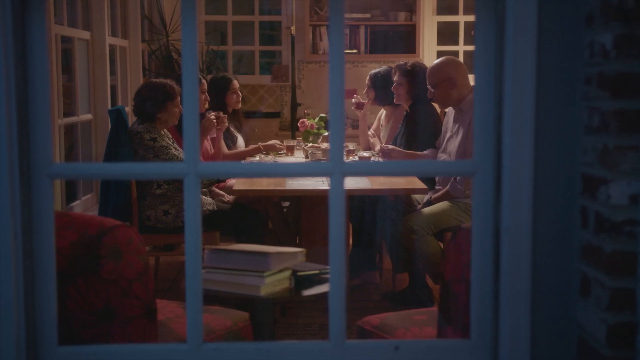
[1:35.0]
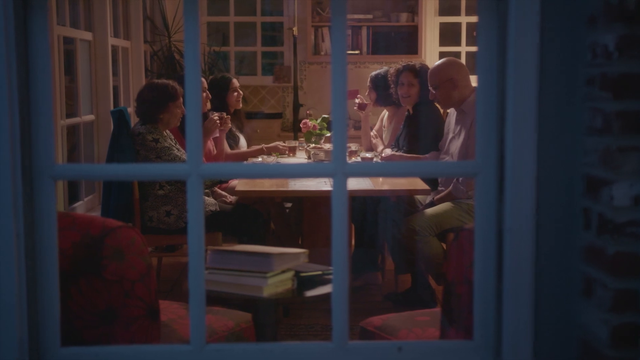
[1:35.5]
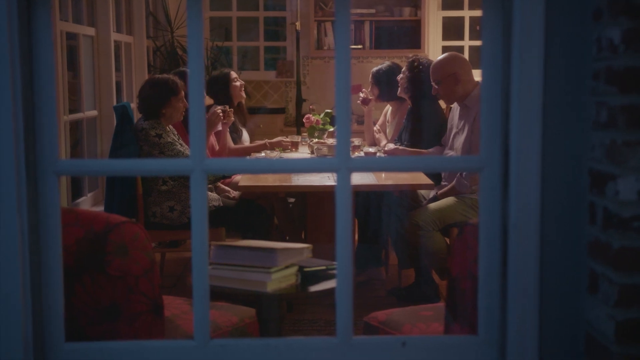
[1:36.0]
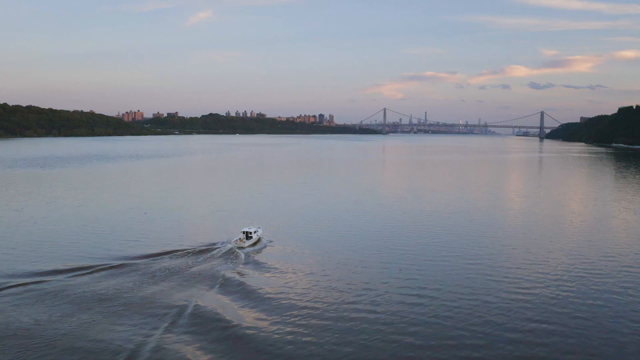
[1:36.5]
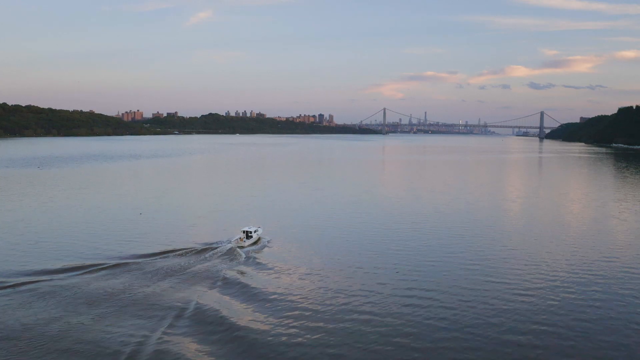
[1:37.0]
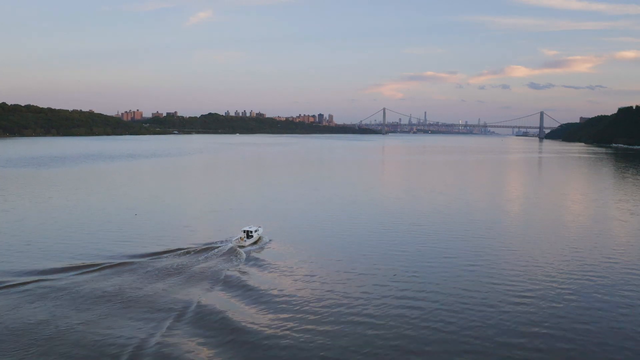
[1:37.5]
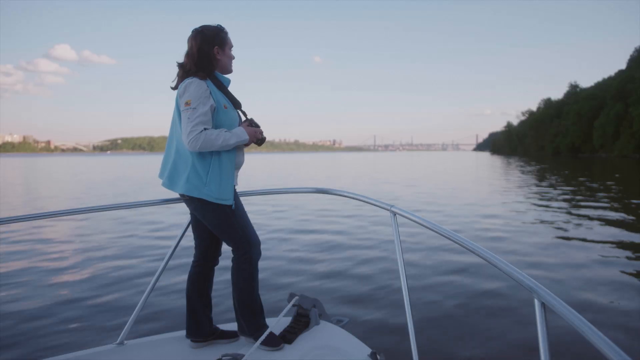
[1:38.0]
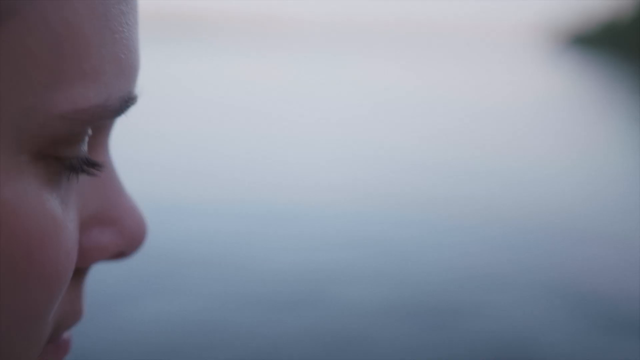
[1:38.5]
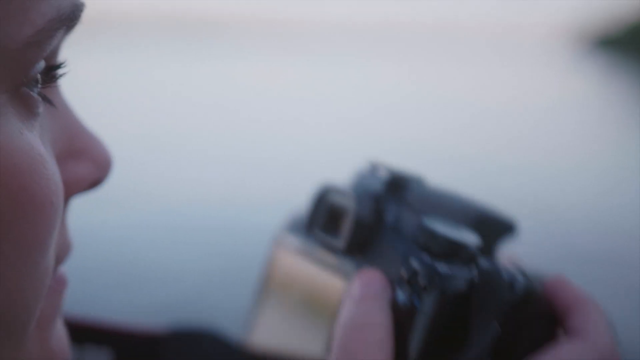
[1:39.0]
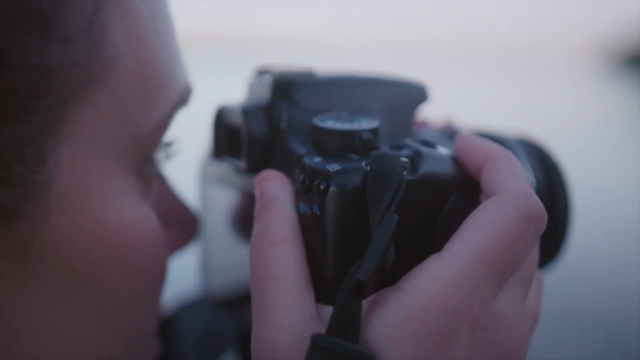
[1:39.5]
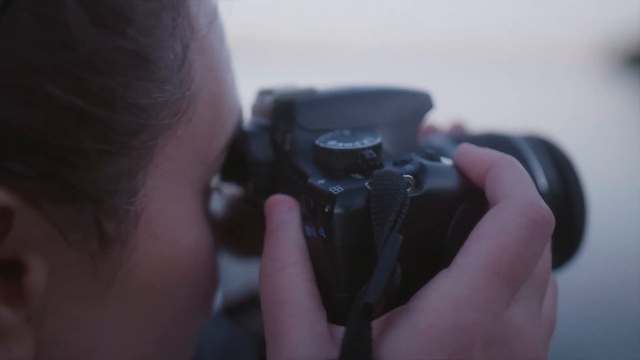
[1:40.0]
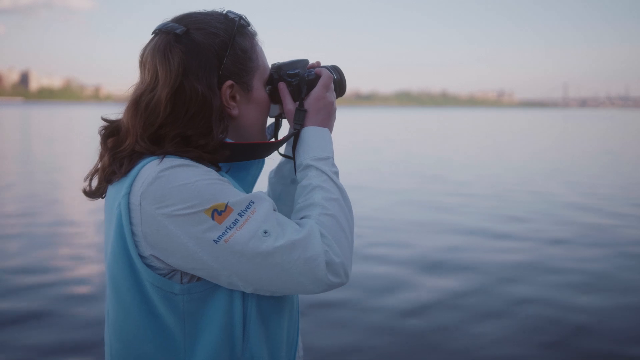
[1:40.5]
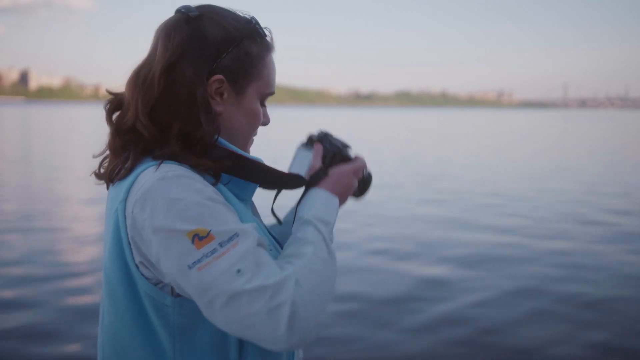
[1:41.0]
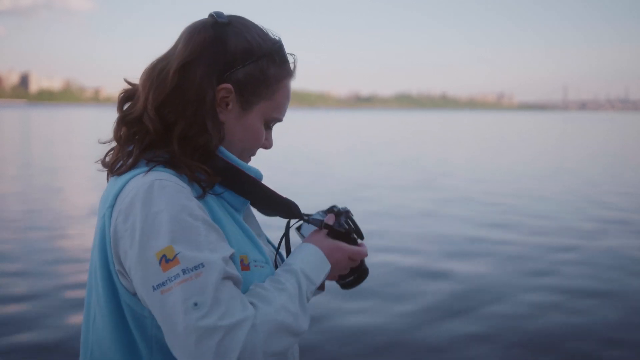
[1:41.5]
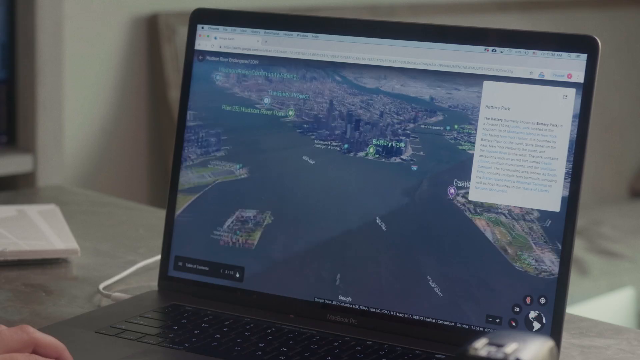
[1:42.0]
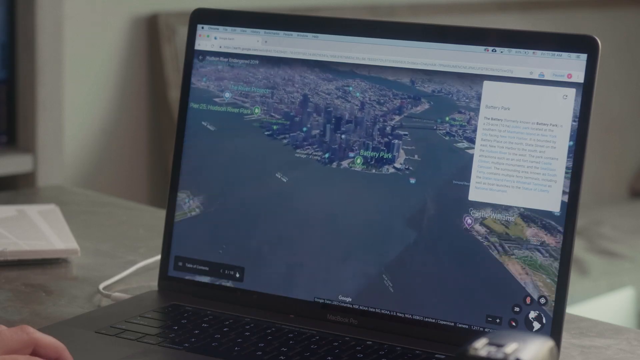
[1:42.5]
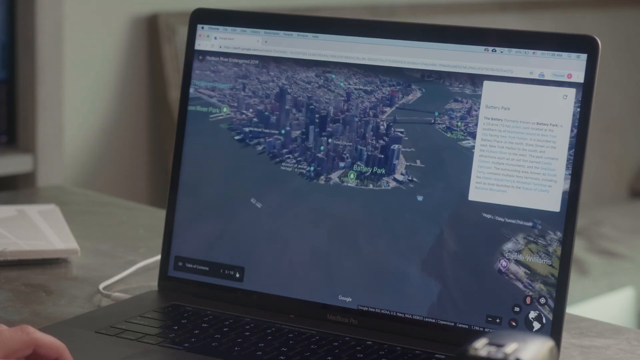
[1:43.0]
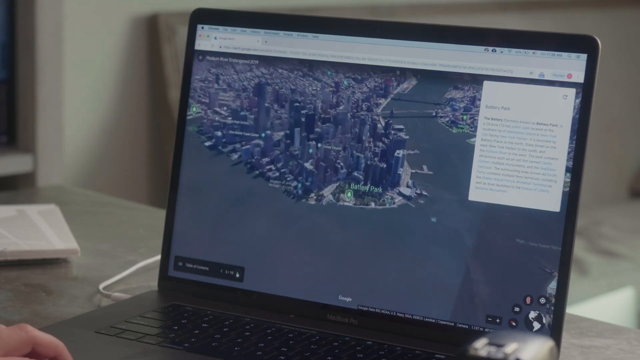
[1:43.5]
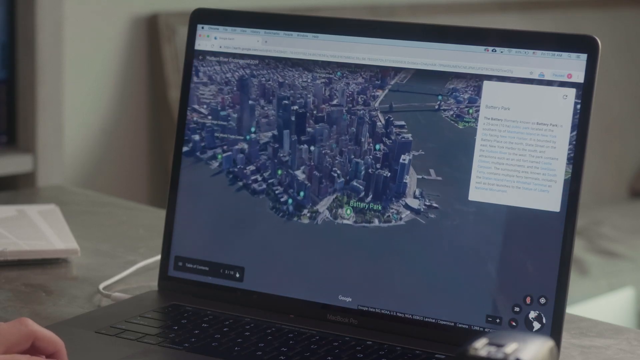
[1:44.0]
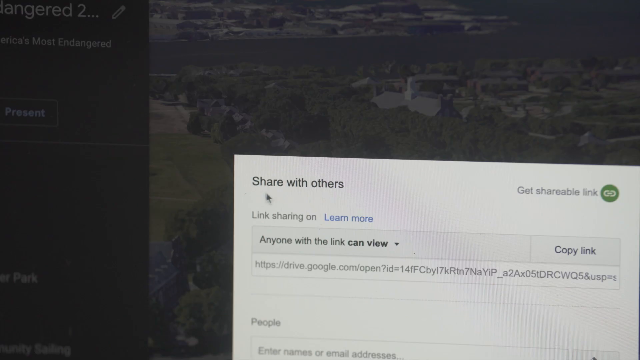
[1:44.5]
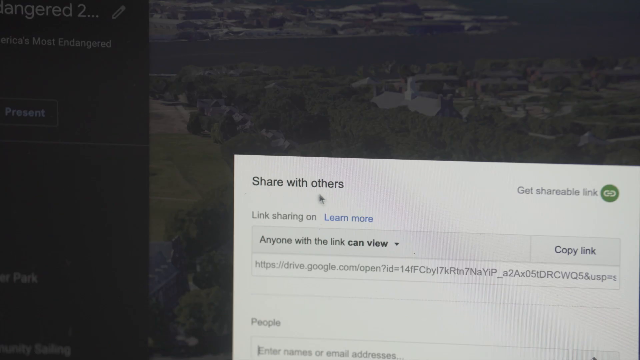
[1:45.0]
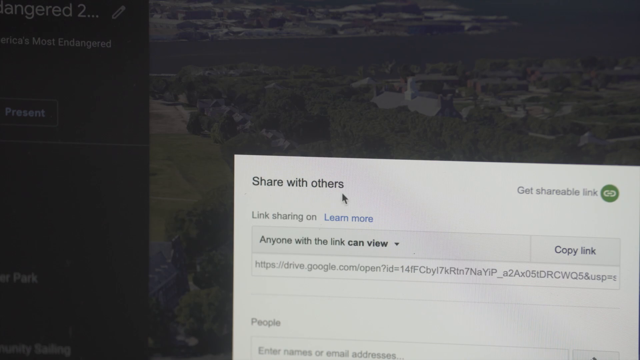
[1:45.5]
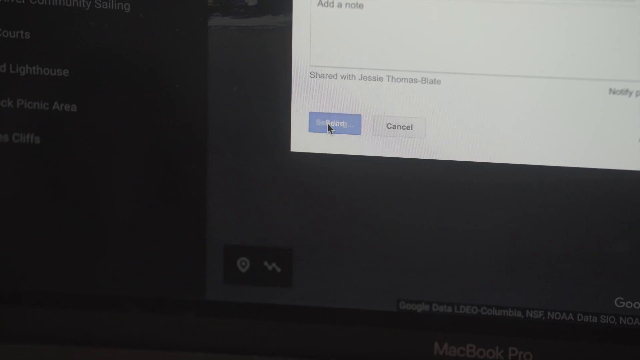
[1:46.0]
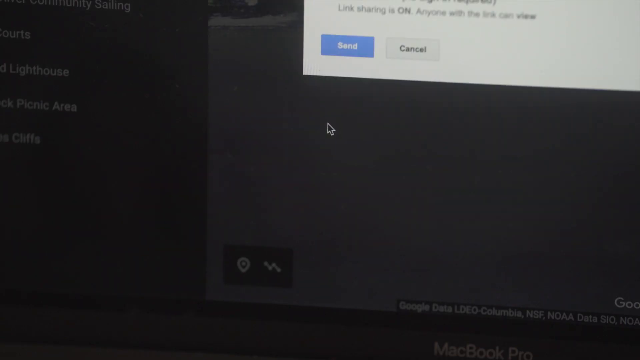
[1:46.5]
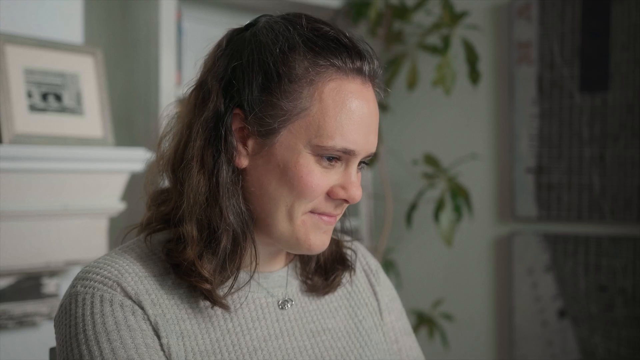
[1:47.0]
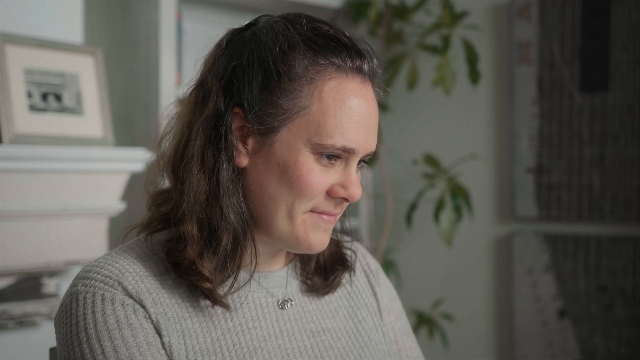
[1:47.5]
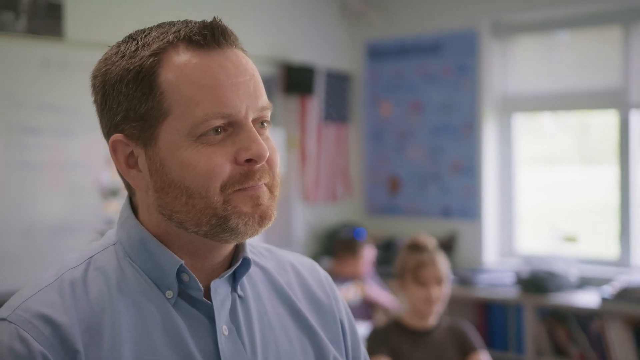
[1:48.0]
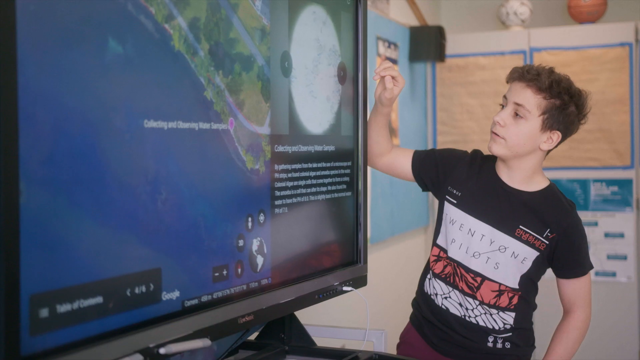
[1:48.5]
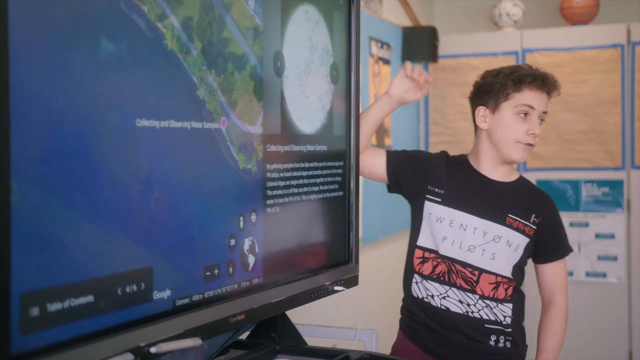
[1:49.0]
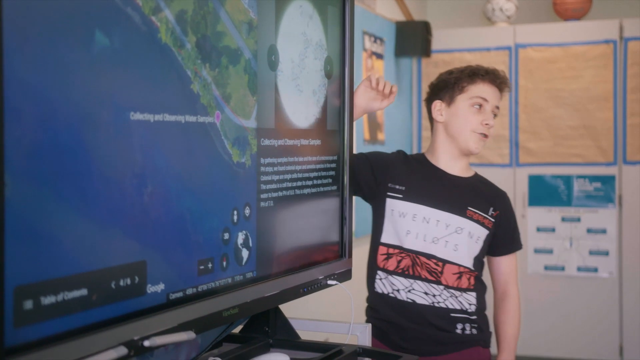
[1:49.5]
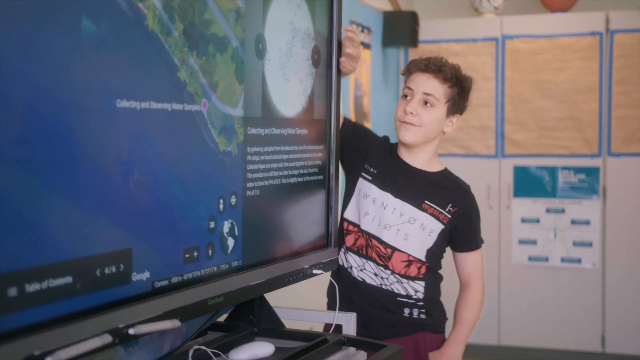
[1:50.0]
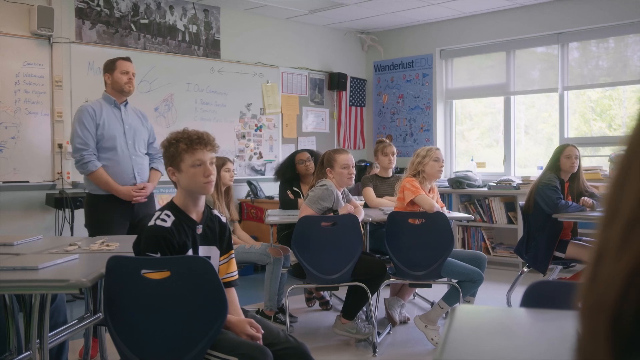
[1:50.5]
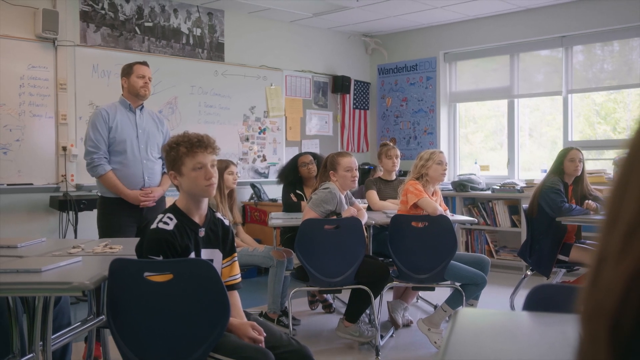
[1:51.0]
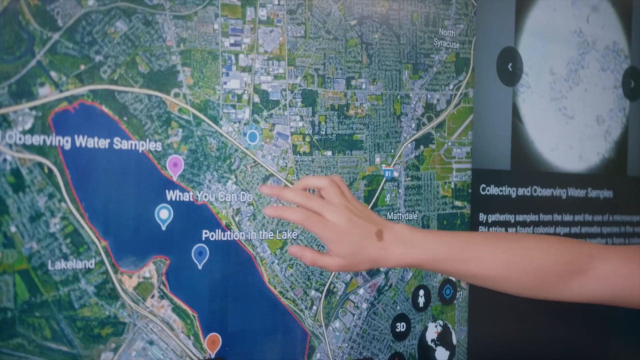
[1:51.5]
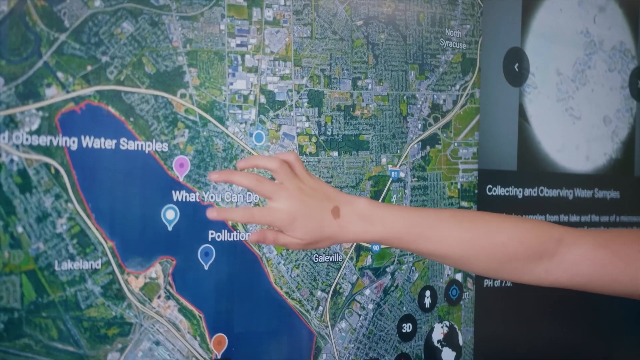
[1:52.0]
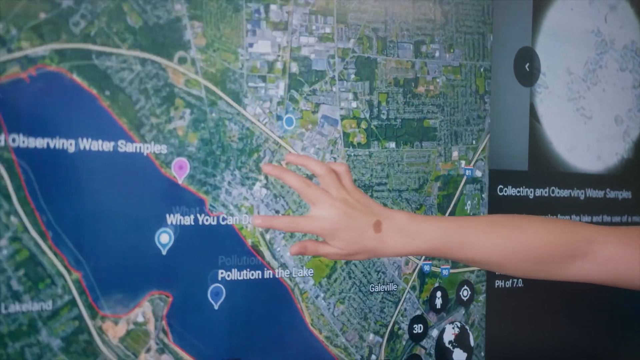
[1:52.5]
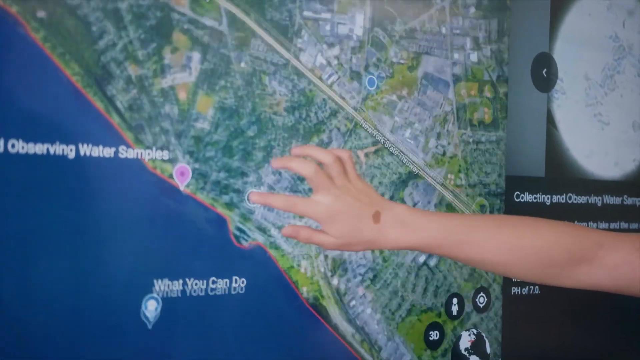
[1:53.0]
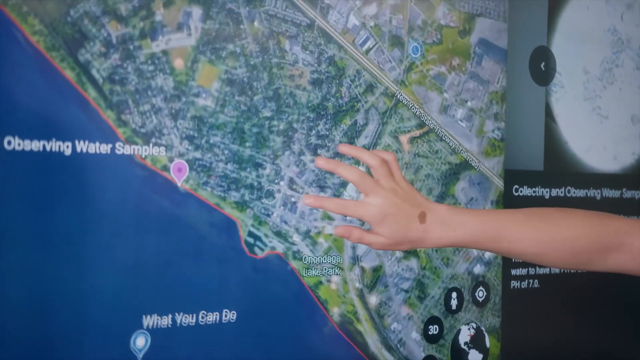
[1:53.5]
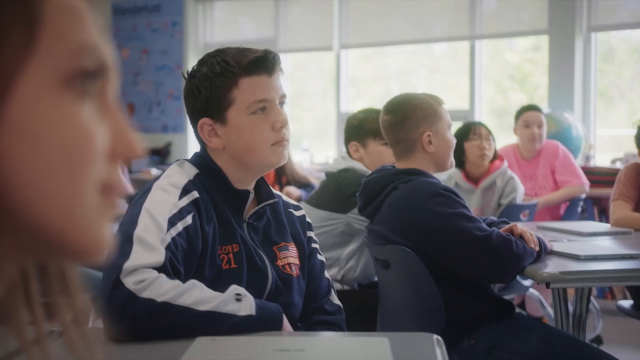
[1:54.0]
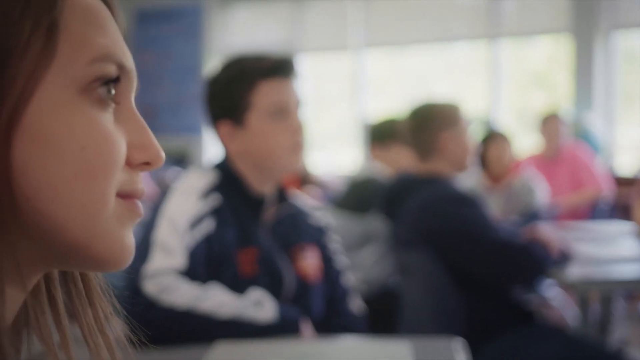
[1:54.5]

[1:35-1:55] Viewed from outside a house through the window, a family talks and laughs at a dinner table. A woman in her late 30s or early 40s takes photos with a camera outside along a river, and a boat travels along the river towards a bridge. An image appears on the woman's laptop, and a map of the riverfront zooms into Manhattan, showing a geotag marked "Battery Park"; she then clicks on a dialogue box that says "share with others". A classroom filled with children appears, where maybe a presentation is happening. At the front of the class, a young student in a black t-shirt points at a large touchscreen monitor and zooms in on a portion of a map, where the geotag is labeled "What you can do", "observing water samples", "pollution in the lake". The scene pulls out to show a riverfront again, then returns to the classroom, where the entire class, including the teacher, is engaged in what the student is showing them. The scene closes with the family at the dinner table.